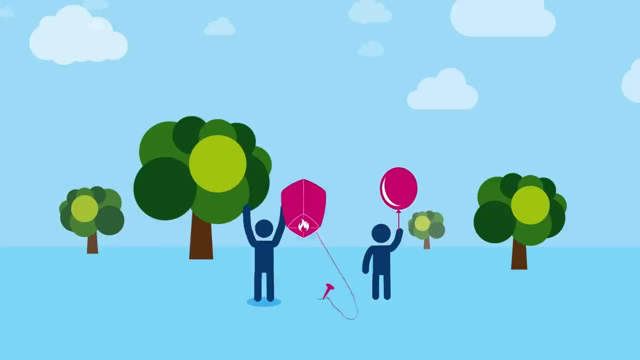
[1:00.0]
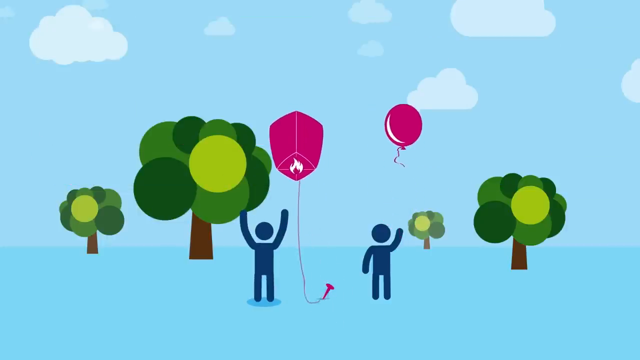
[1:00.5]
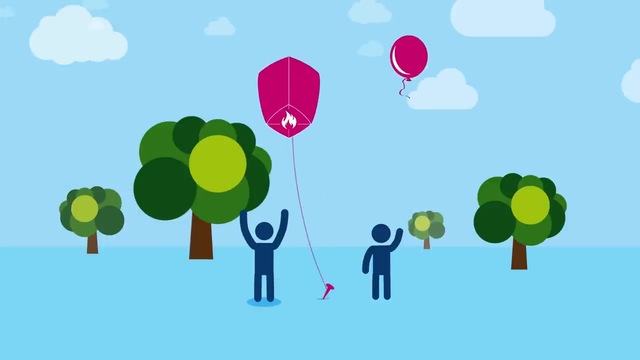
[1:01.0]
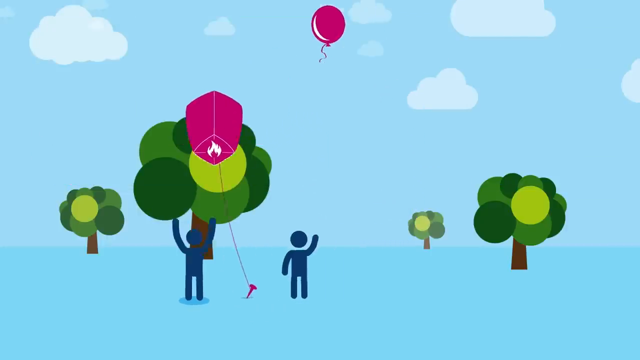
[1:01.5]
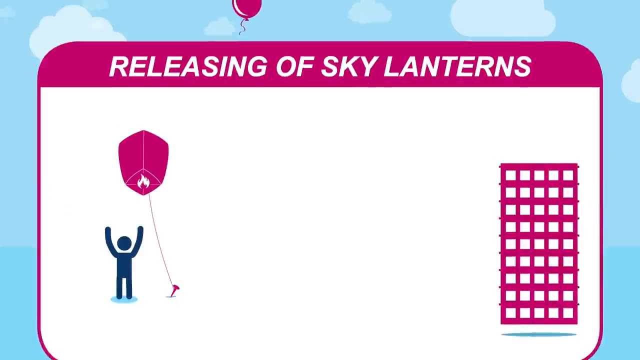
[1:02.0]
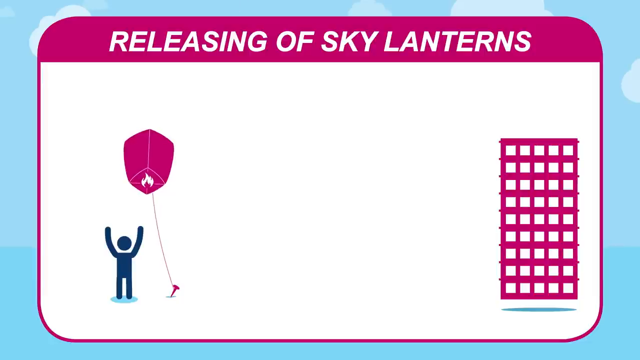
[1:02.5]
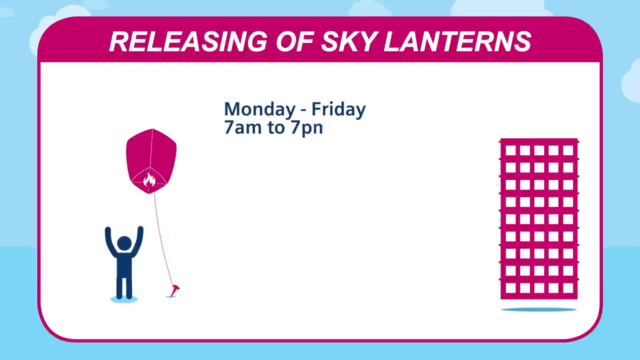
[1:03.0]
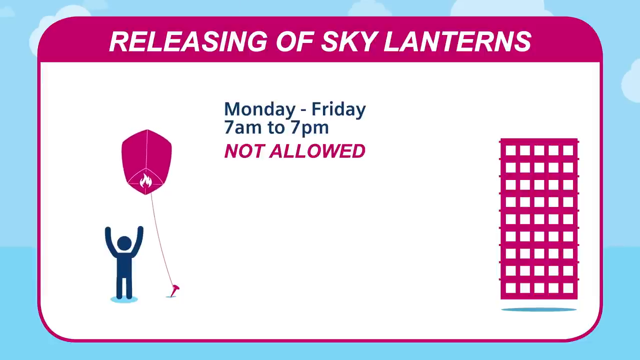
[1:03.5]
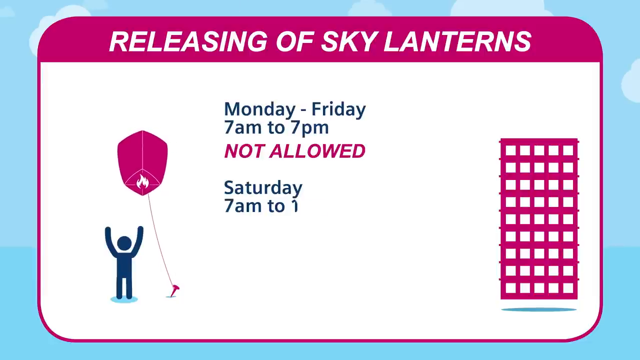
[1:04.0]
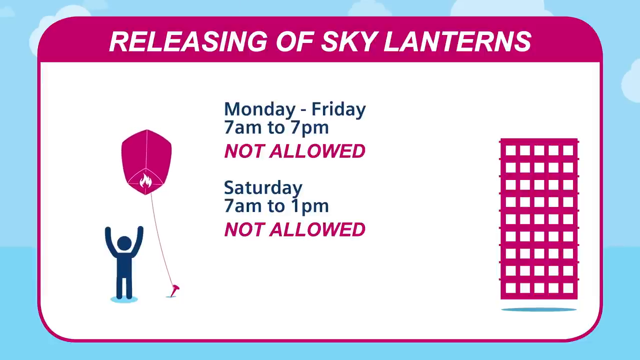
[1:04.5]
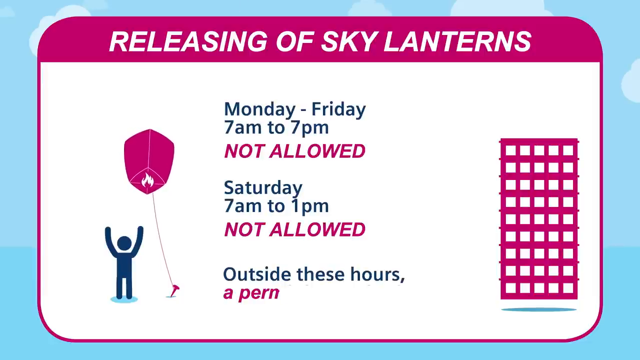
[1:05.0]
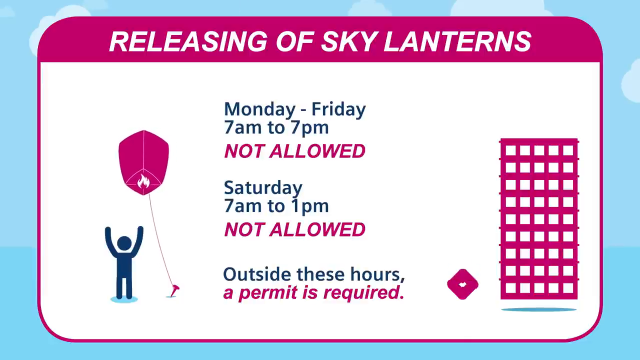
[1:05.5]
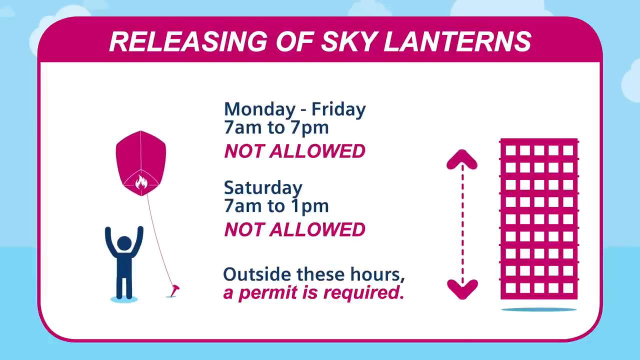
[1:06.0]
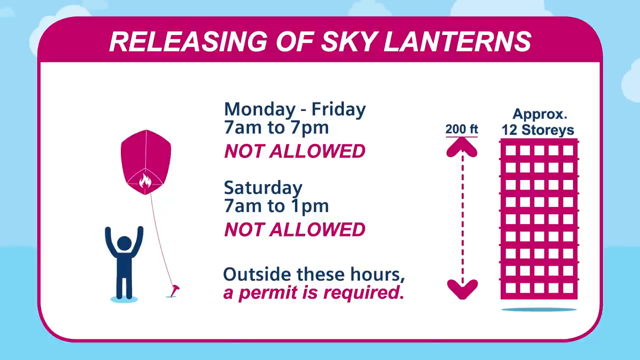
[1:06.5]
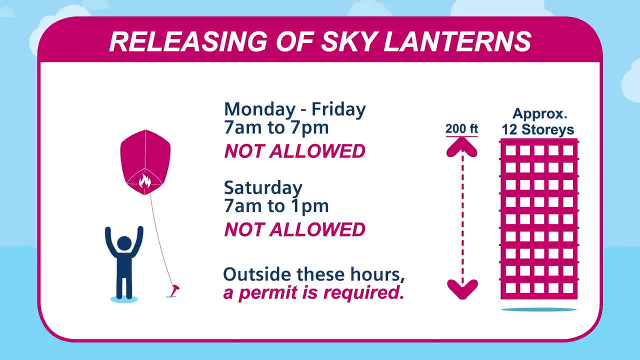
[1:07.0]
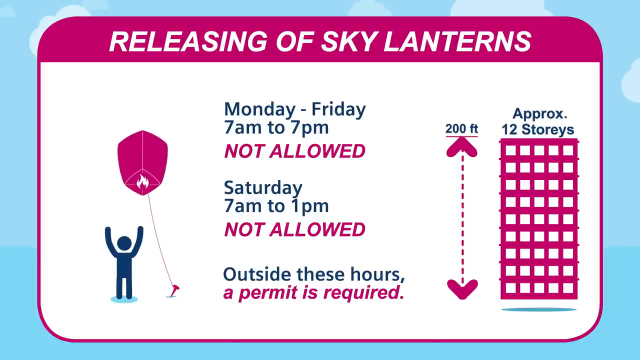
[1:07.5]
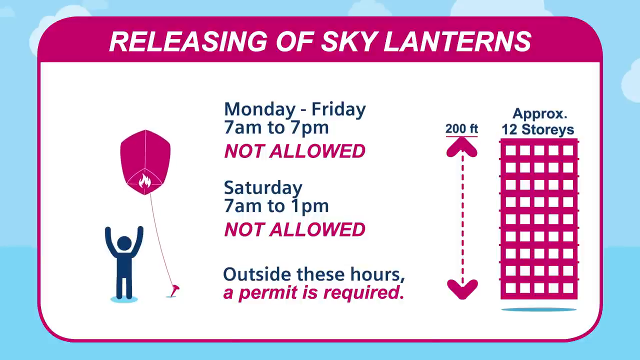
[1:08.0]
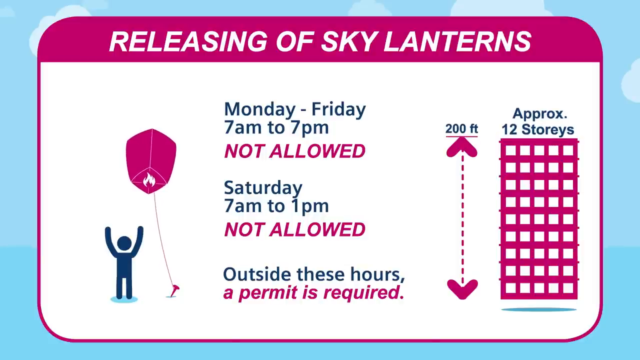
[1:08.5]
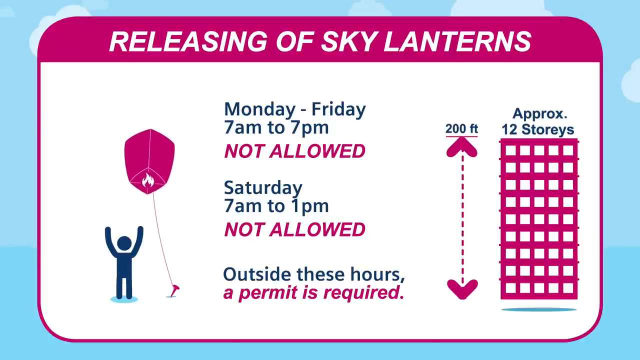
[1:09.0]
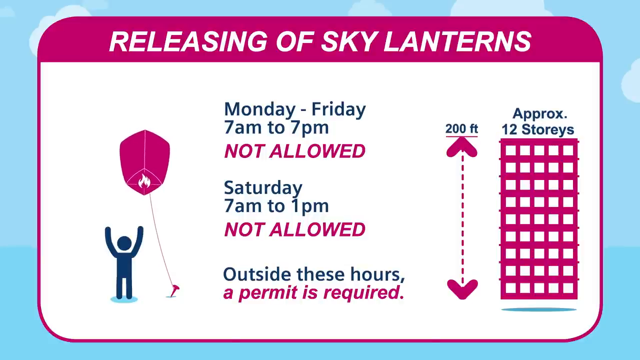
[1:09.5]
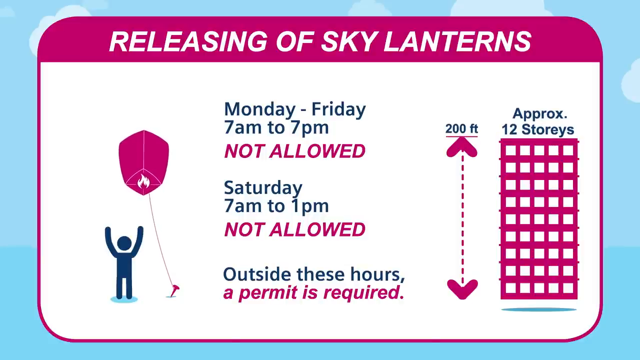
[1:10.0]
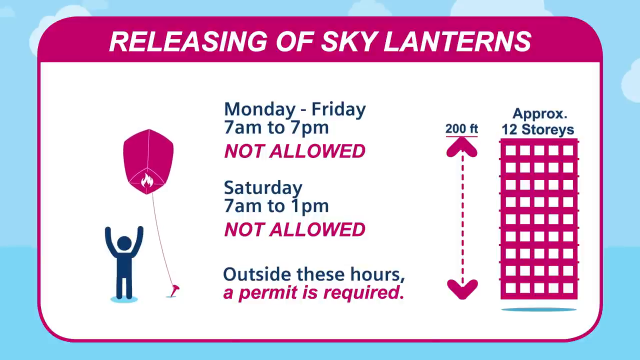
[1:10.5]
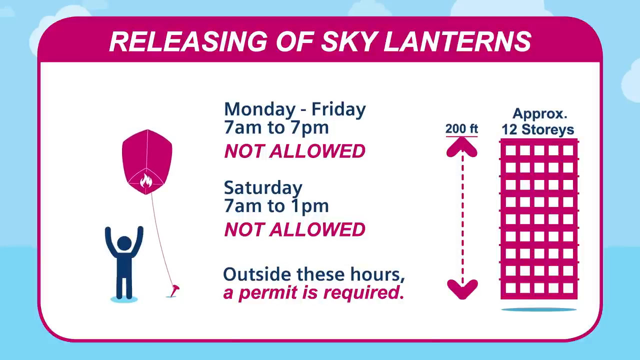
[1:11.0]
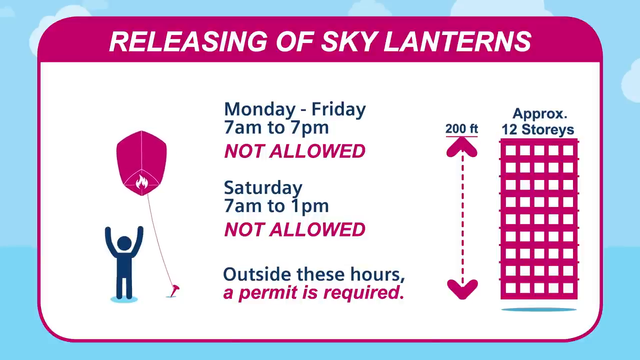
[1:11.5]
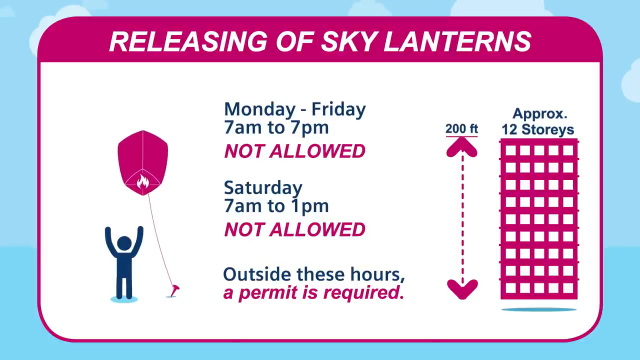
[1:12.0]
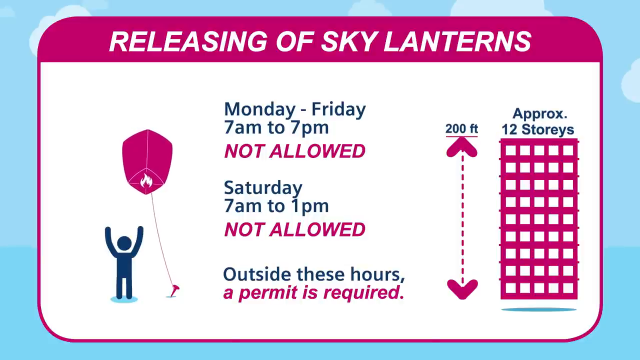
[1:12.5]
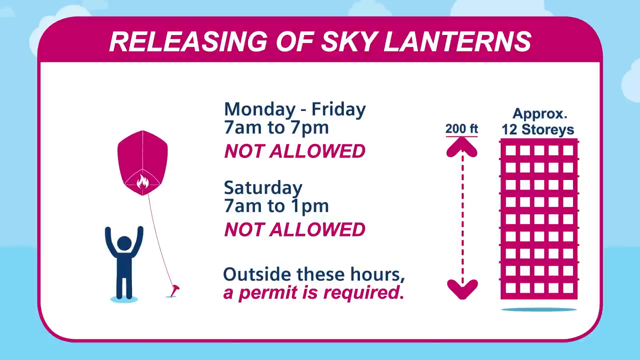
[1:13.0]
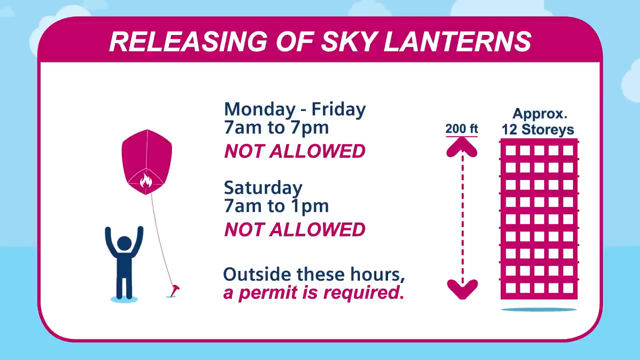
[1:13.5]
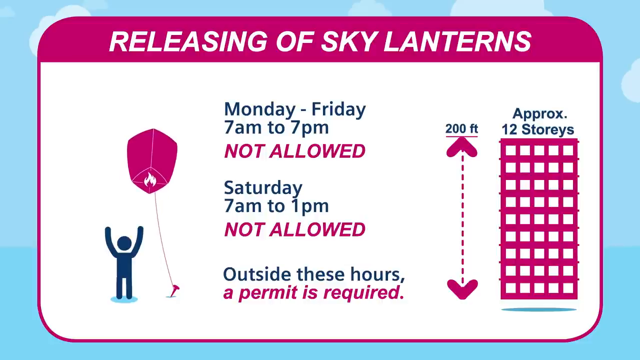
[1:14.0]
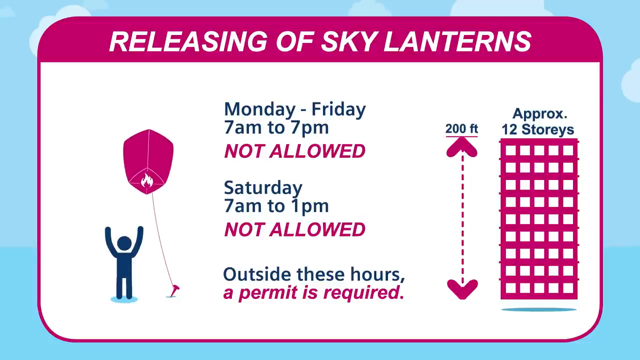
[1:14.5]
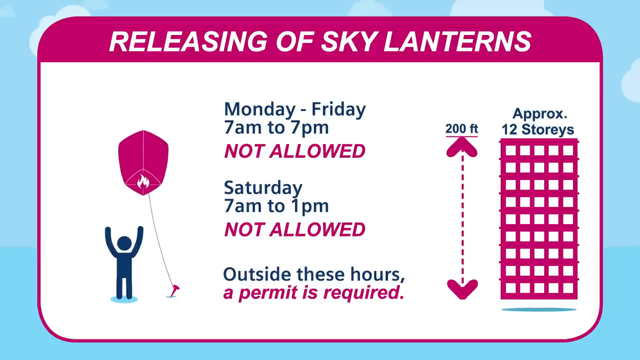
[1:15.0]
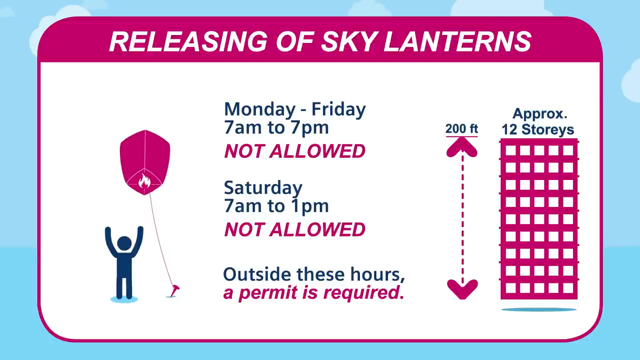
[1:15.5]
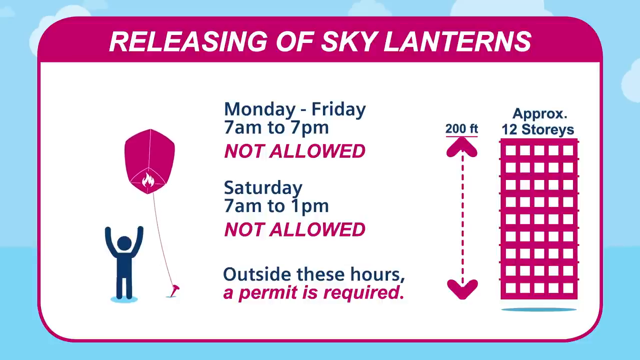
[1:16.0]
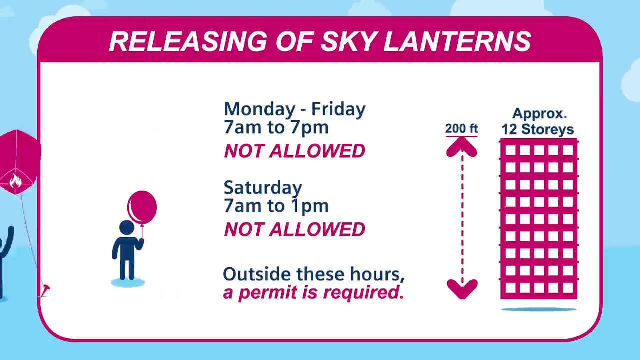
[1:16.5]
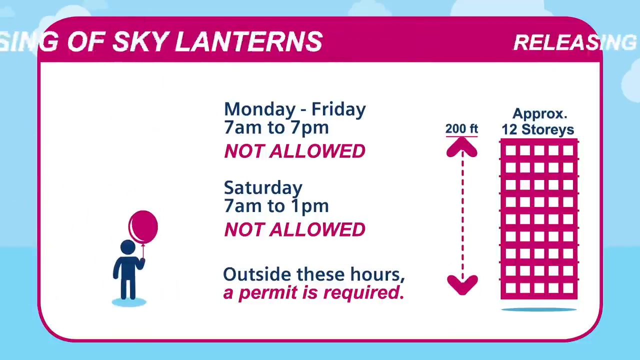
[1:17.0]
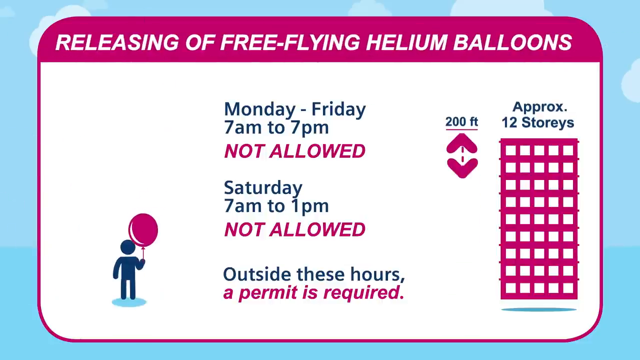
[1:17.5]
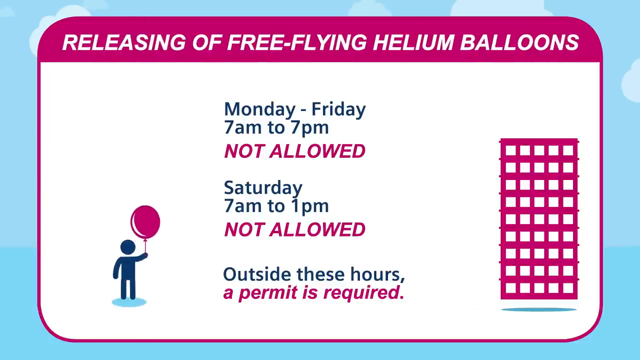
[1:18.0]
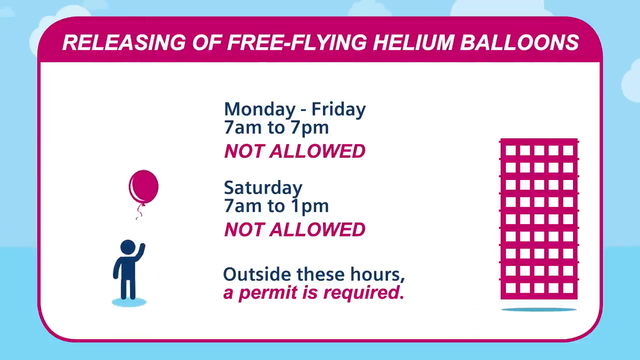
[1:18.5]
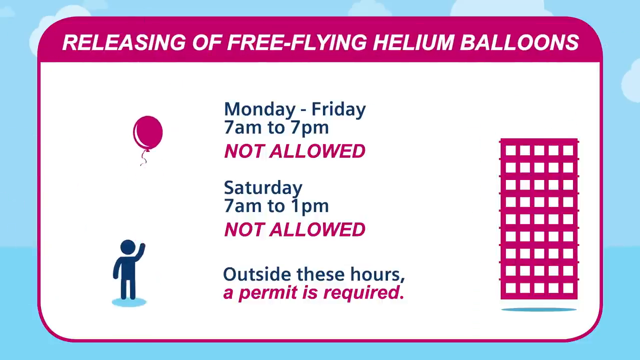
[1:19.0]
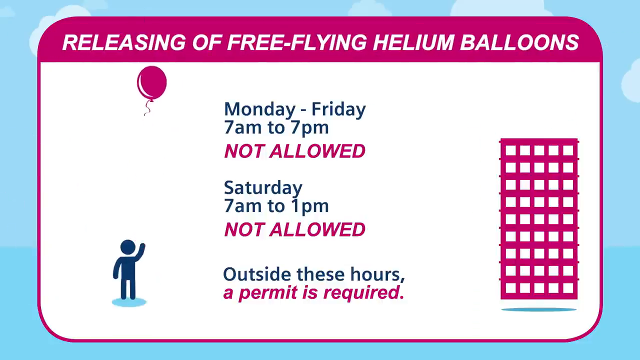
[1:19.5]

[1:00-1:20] Two boys throw things into the sky, and the text reads "releasing of sky lanterns". A box explains that this is not allowed Monday to Friday from 7 a.m. to 7 p.m. or on Saturday from 7 a.m. to 1 p.m., and that outside these hours a permit is required to release sky lanterns. The box also shows the distance of approximately 200 feet, illustrated by a 12-story building. At the end, the next topic begins: the releasing of free-flying helium balloons.